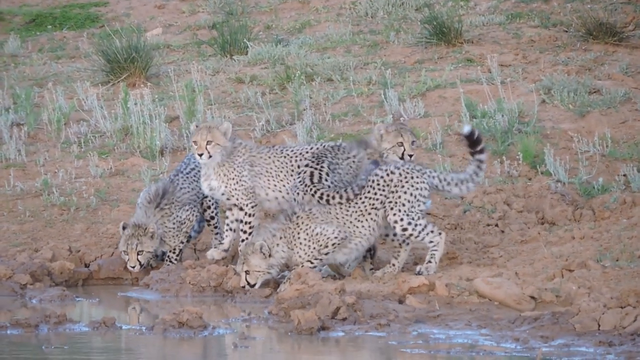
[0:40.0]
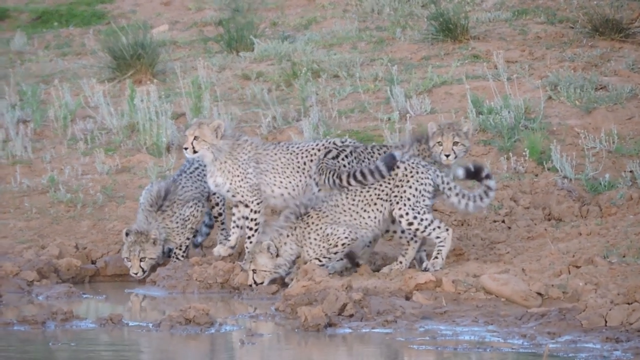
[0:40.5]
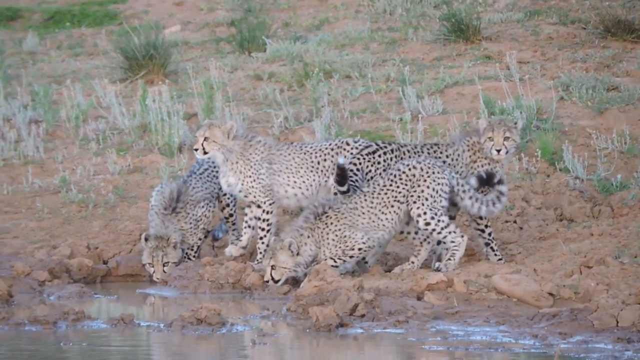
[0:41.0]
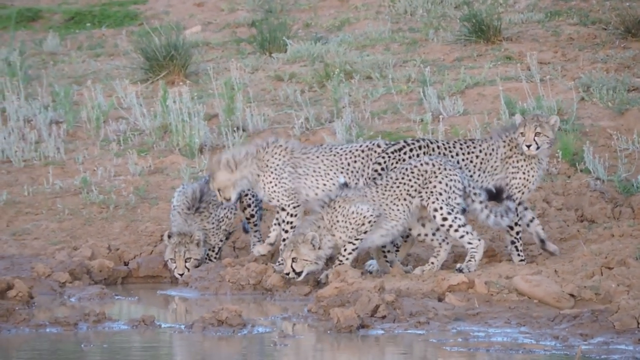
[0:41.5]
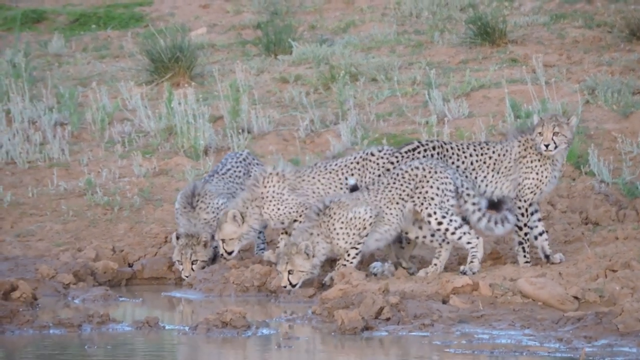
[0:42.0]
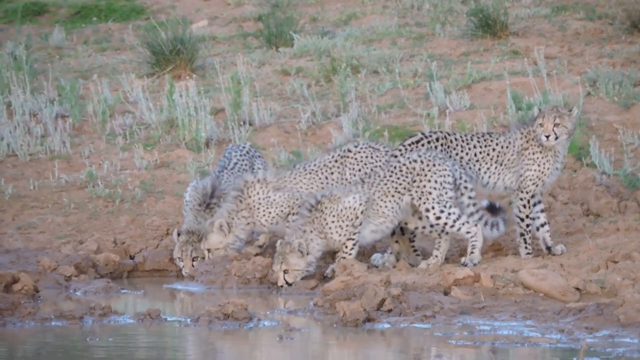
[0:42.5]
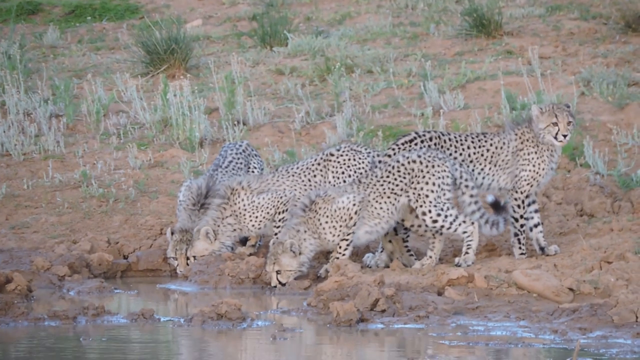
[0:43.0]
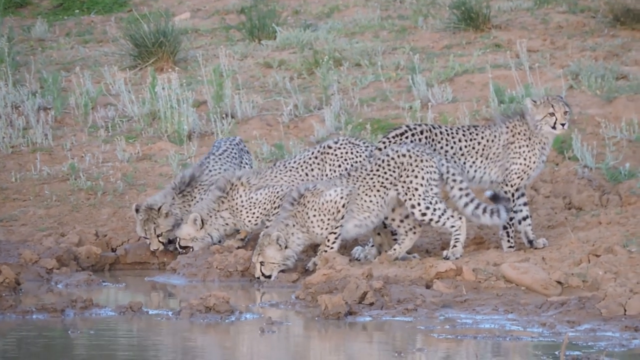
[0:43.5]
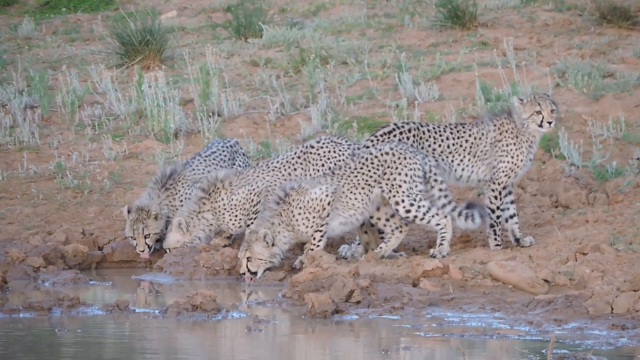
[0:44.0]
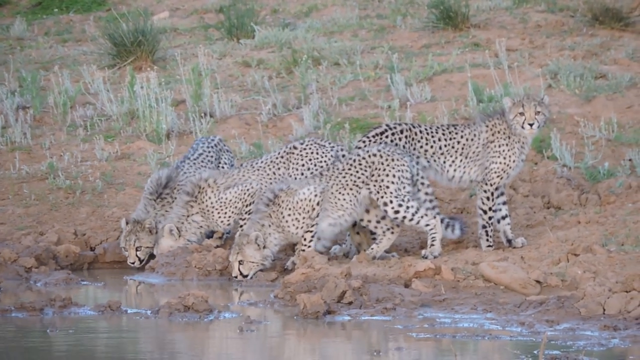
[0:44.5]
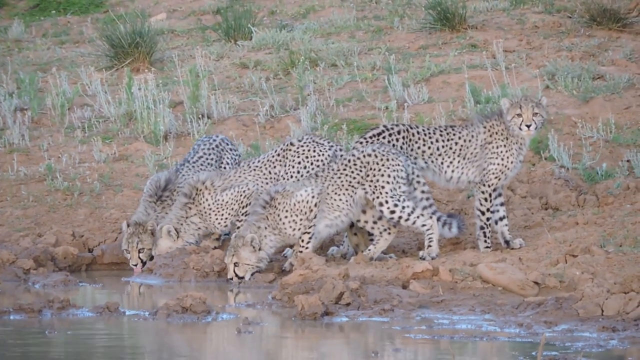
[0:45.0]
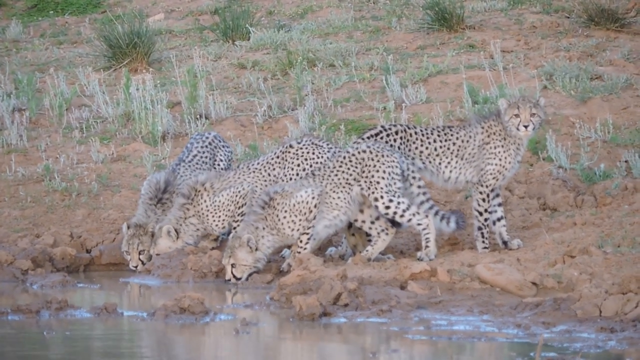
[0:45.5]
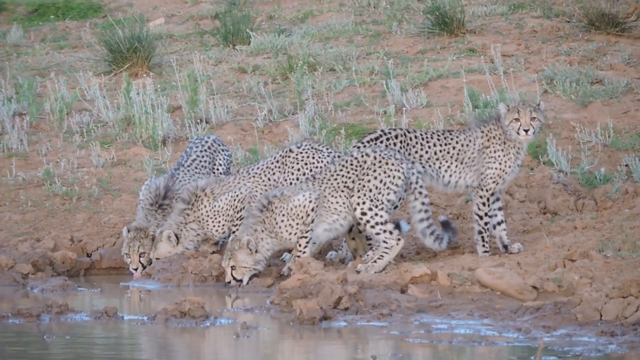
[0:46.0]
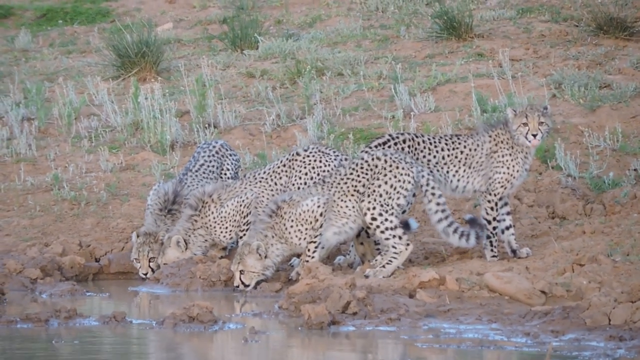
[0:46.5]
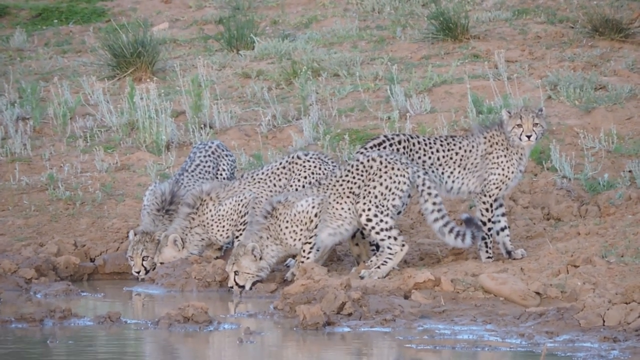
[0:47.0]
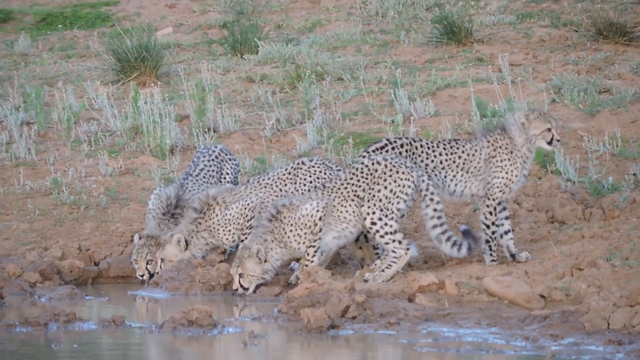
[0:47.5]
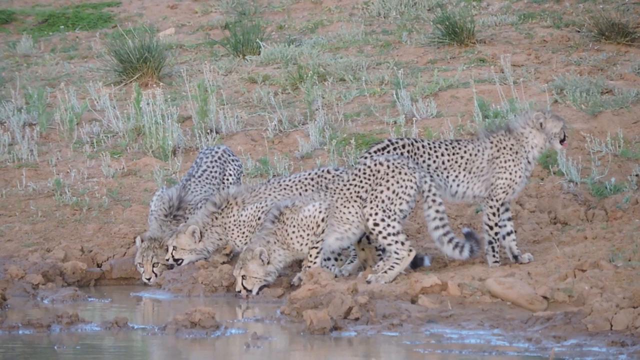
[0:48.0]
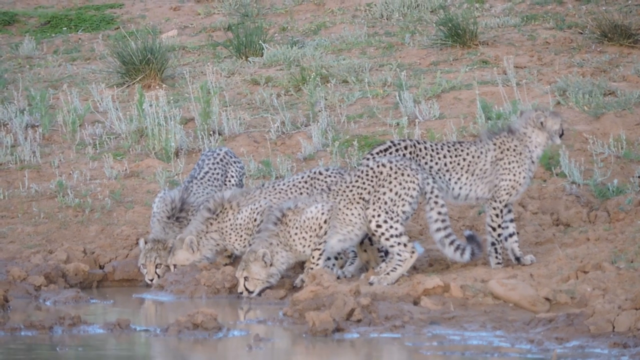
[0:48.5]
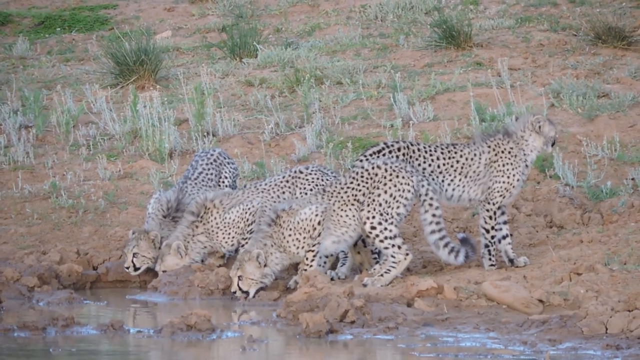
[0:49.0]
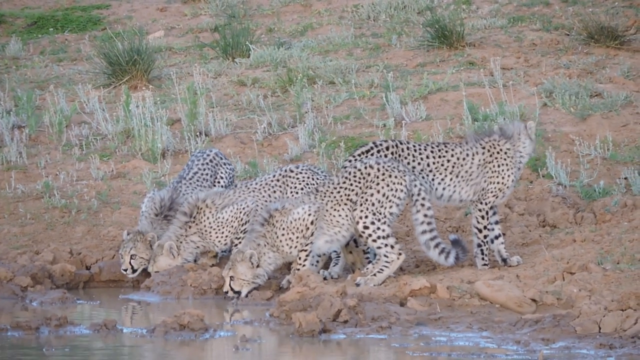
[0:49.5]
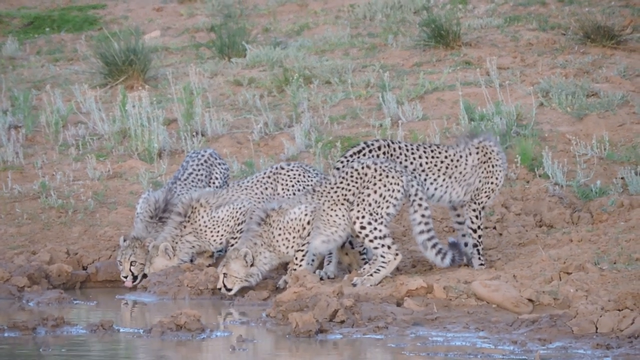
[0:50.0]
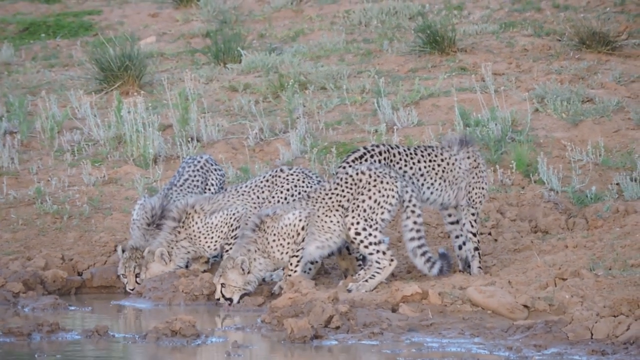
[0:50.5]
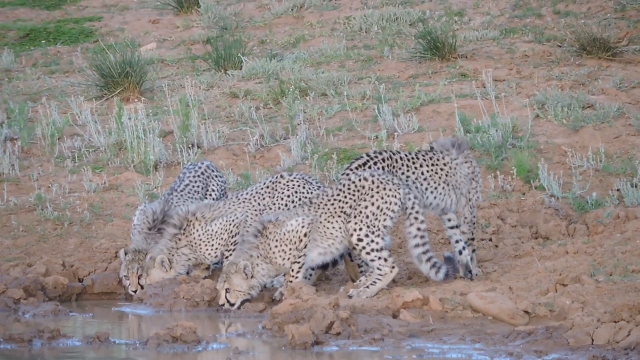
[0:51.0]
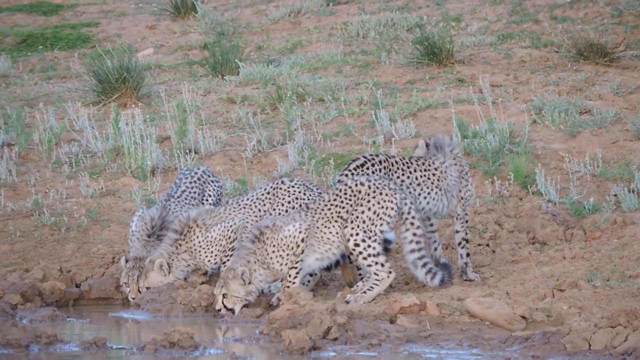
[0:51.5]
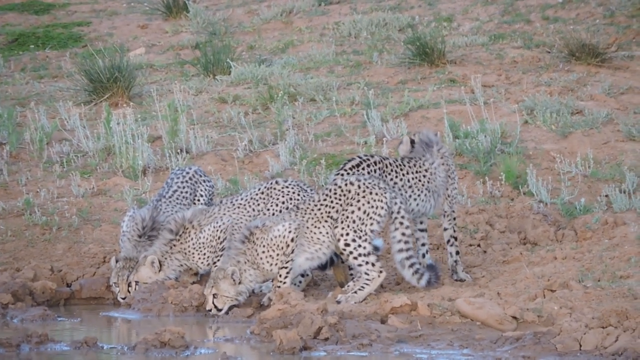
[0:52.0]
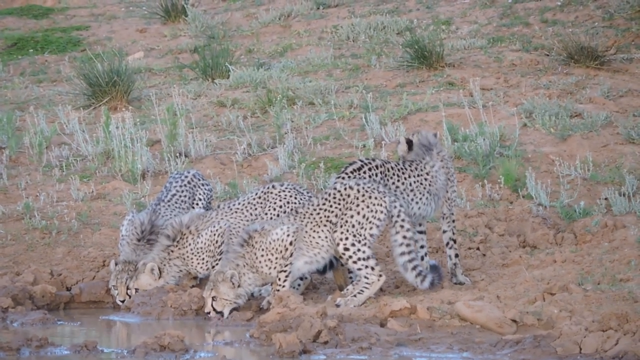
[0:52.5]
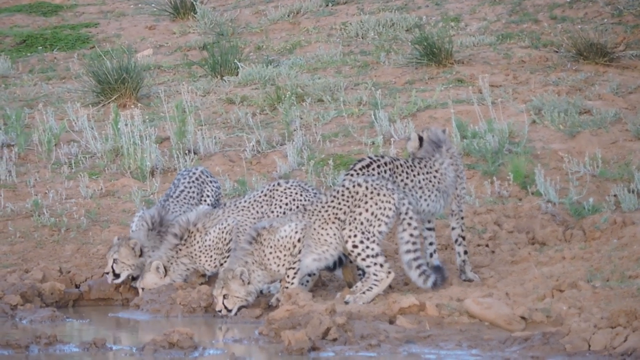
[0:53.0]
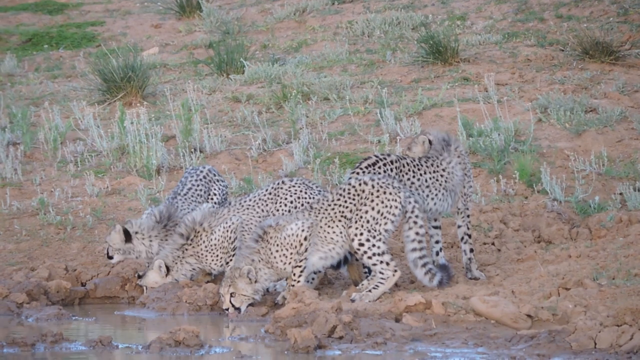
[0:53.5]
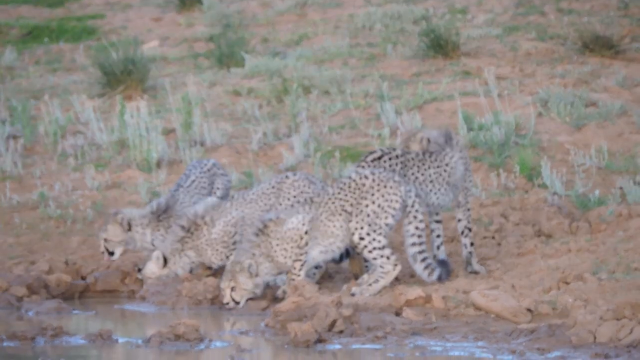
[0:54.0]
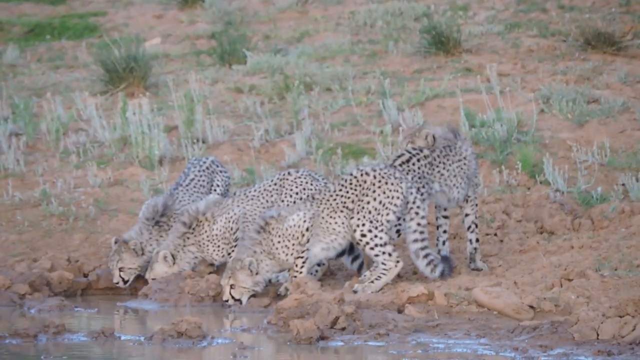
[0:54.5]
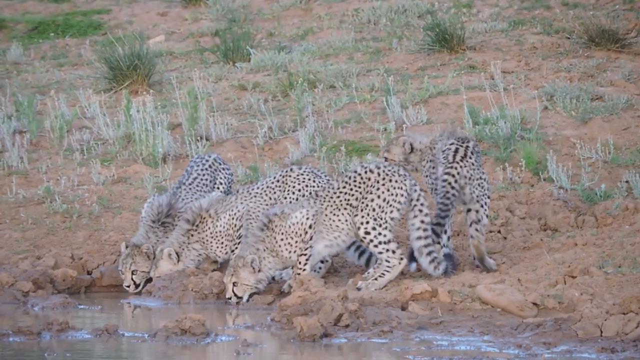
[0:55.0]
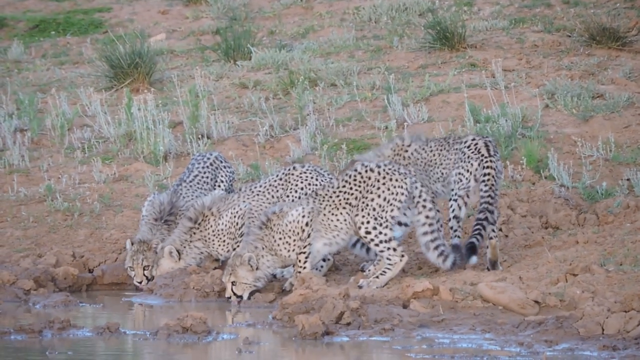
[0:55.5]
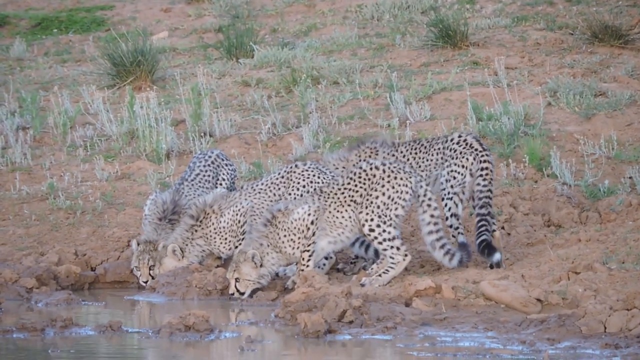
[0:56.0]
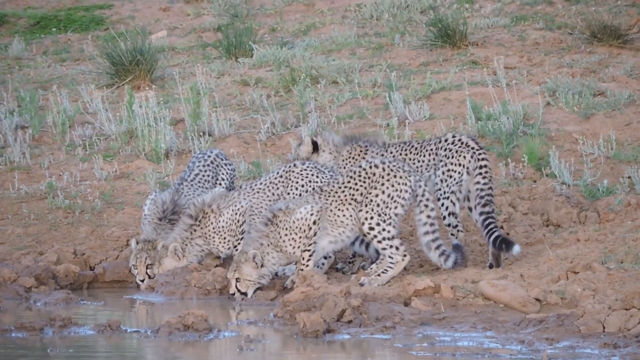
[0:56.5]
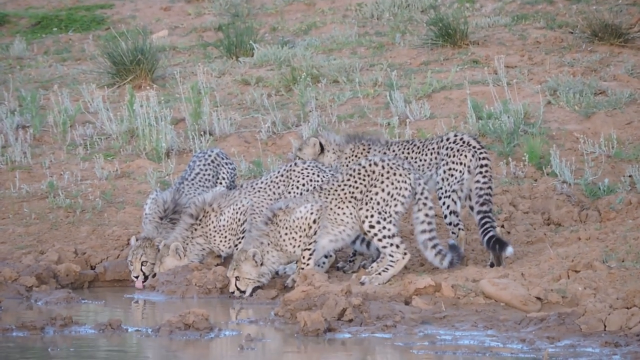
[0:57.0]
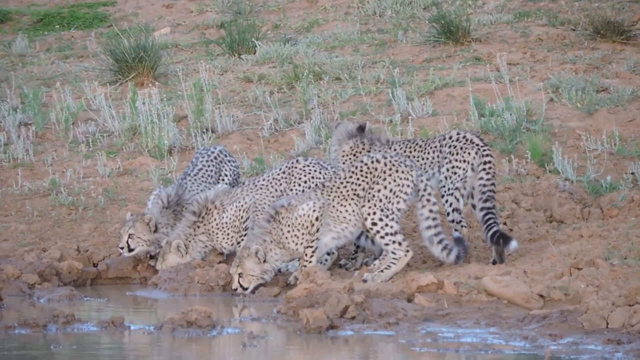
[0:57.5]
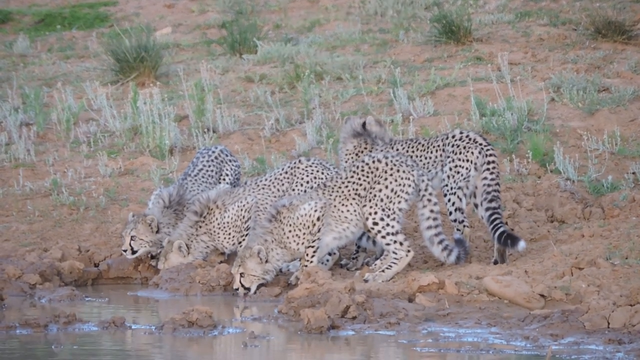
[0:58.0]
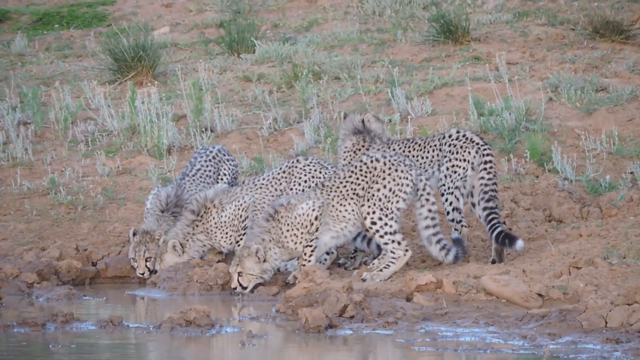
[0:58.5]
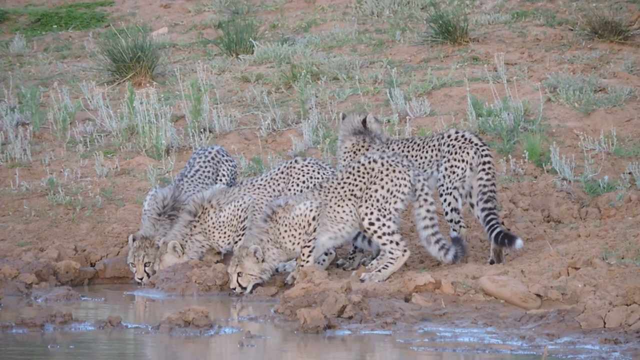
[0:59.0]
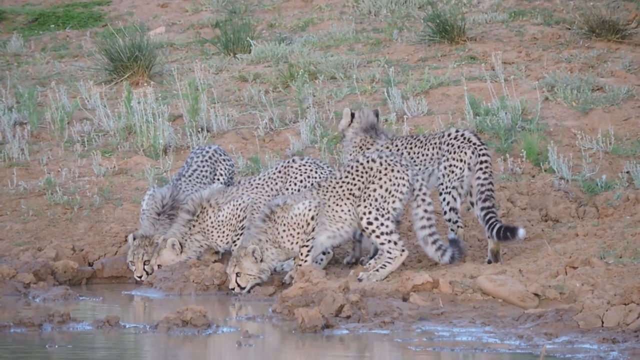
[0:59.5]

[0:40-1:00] The bigger one with the tag has walked off, leaving only the smaller ones, which look like cubs. One stops, turns its head towards the left side, then turns right back around. The cubs repeatedly drink a little and then look up, doing this constantly throughout.